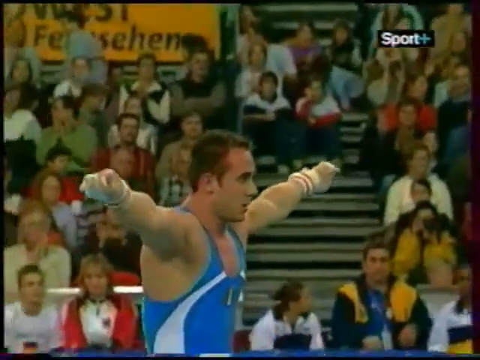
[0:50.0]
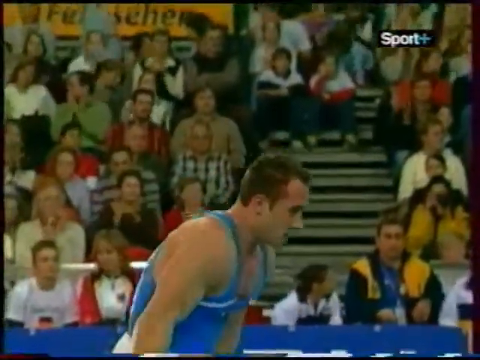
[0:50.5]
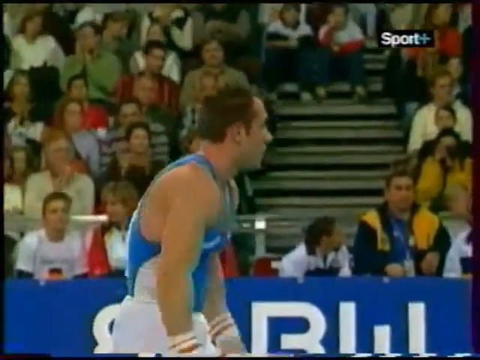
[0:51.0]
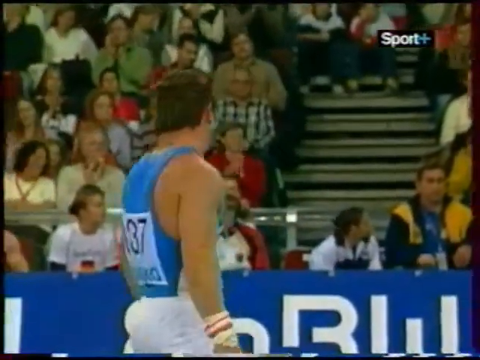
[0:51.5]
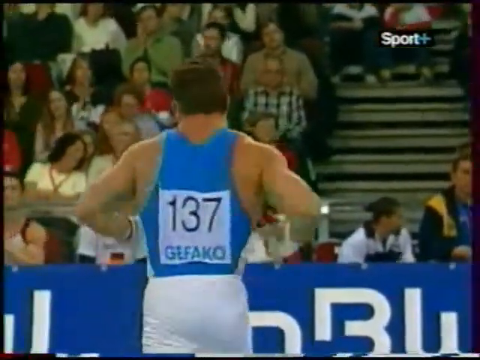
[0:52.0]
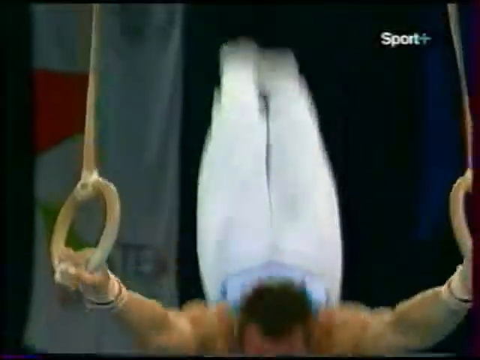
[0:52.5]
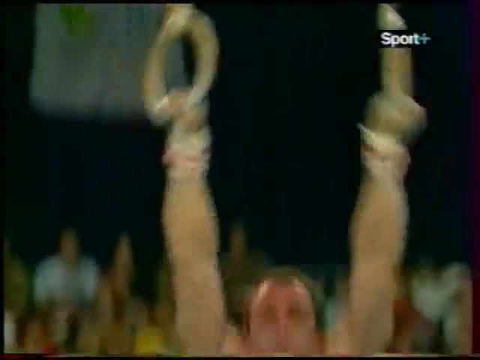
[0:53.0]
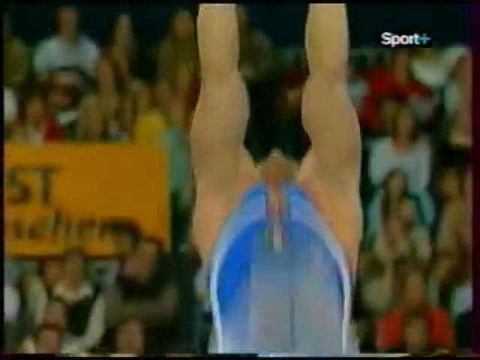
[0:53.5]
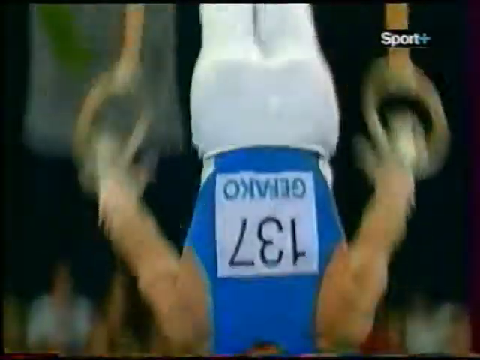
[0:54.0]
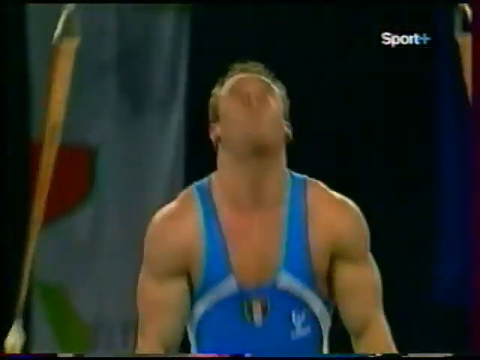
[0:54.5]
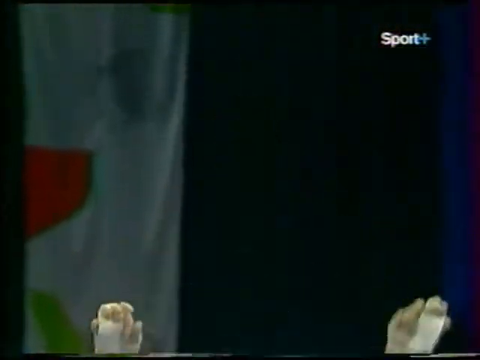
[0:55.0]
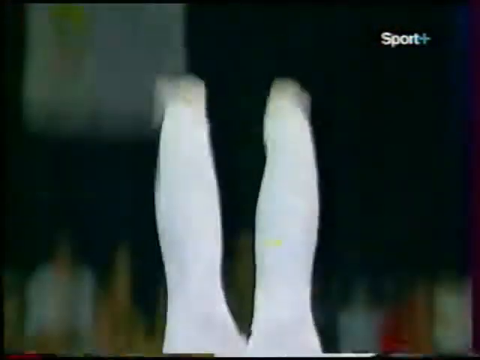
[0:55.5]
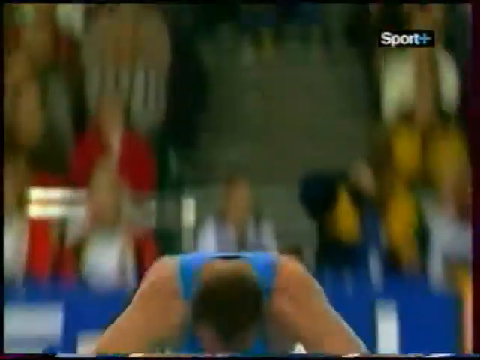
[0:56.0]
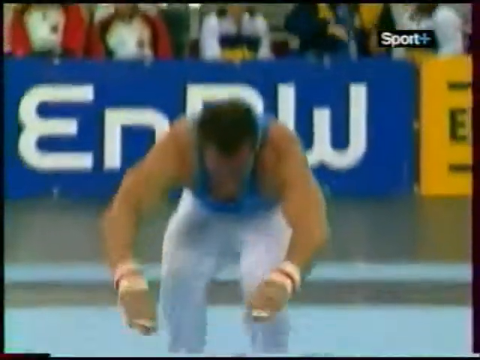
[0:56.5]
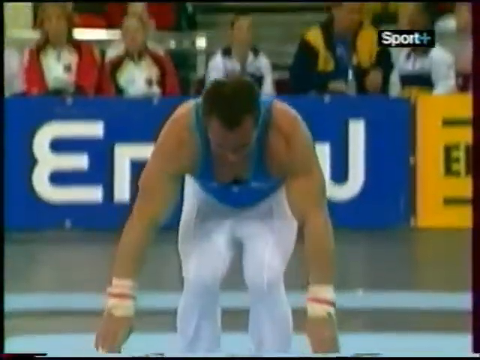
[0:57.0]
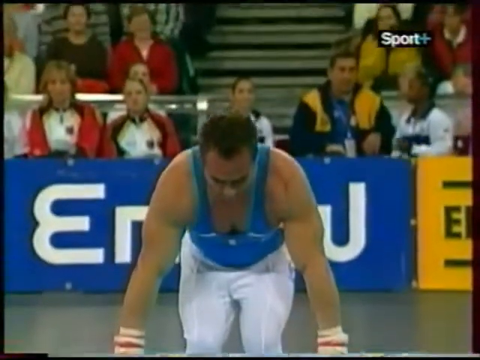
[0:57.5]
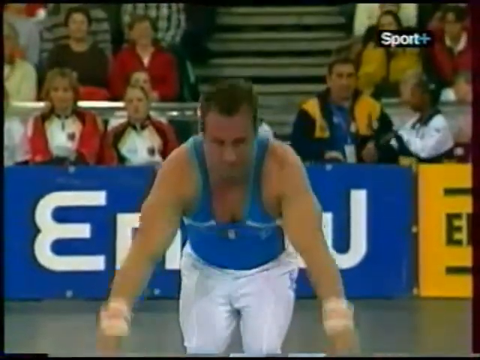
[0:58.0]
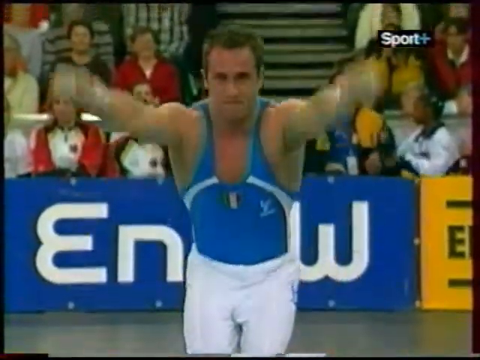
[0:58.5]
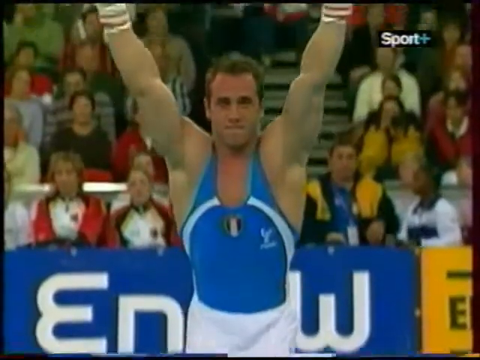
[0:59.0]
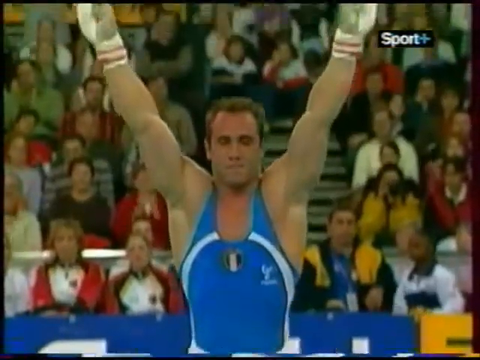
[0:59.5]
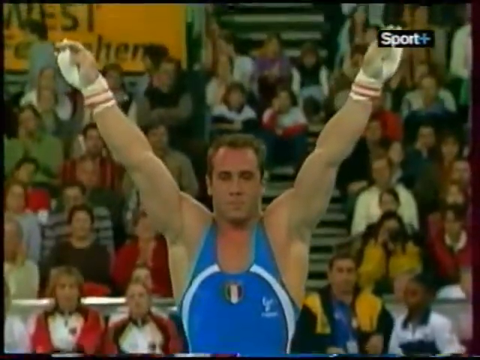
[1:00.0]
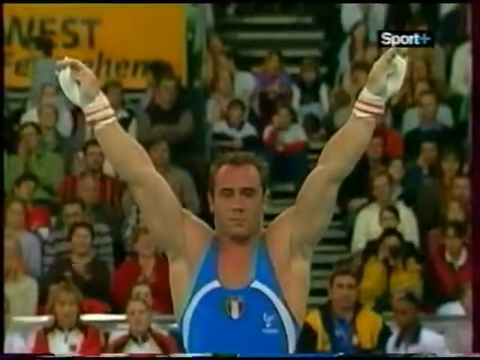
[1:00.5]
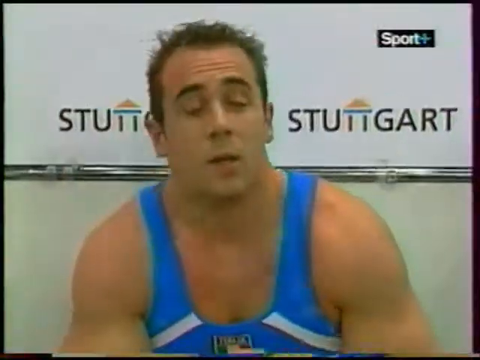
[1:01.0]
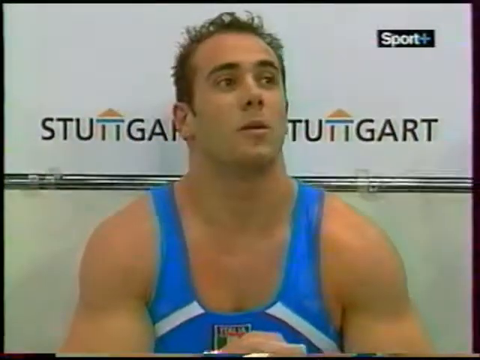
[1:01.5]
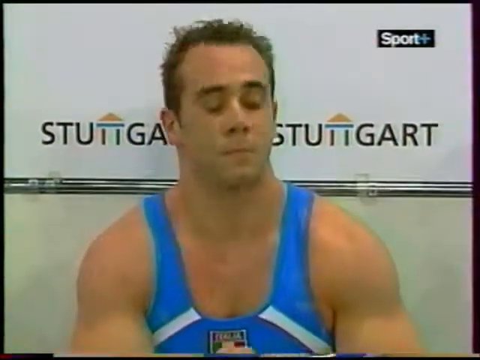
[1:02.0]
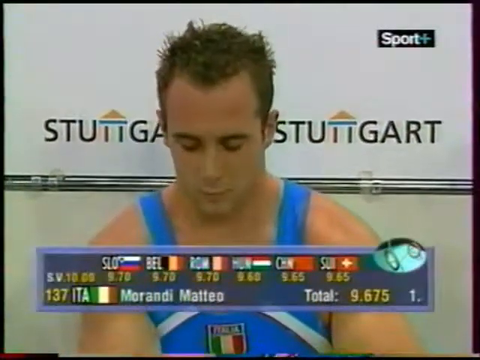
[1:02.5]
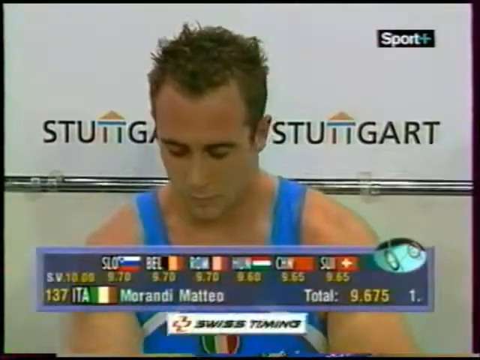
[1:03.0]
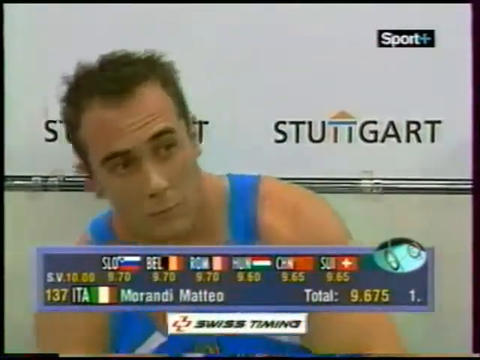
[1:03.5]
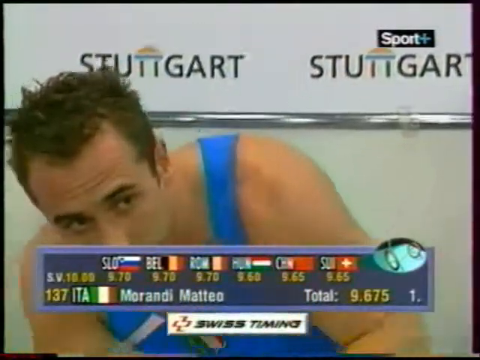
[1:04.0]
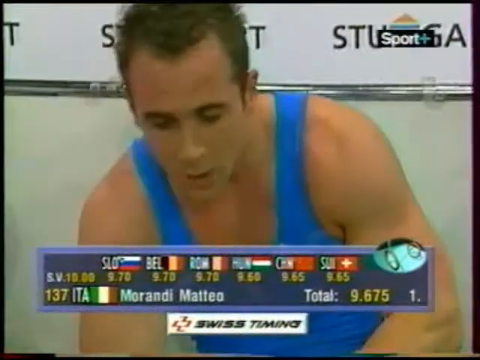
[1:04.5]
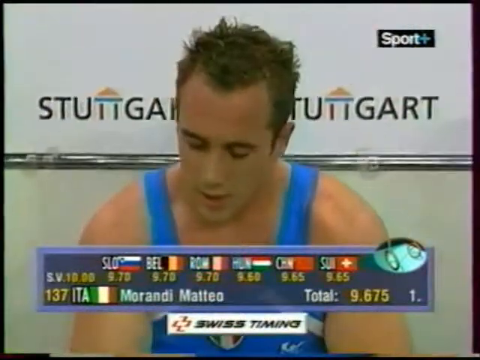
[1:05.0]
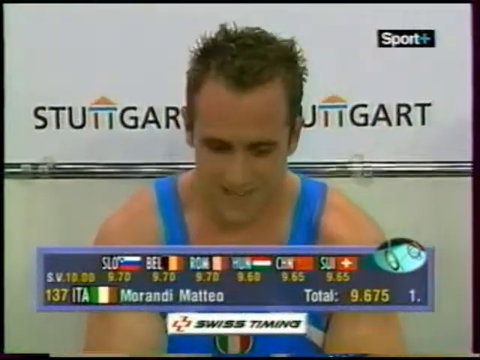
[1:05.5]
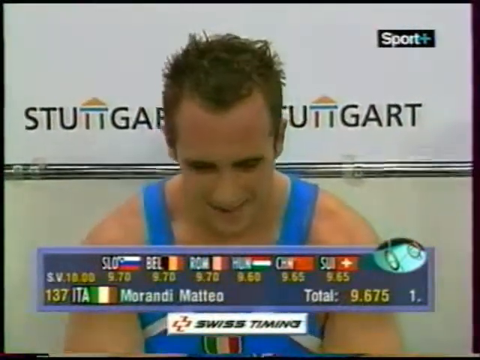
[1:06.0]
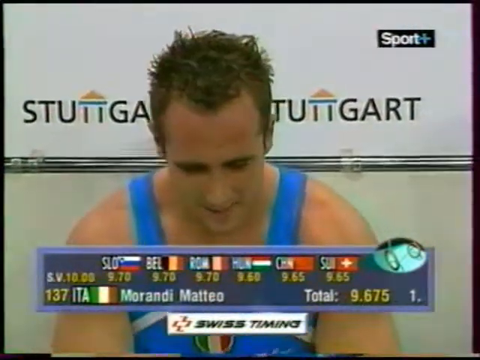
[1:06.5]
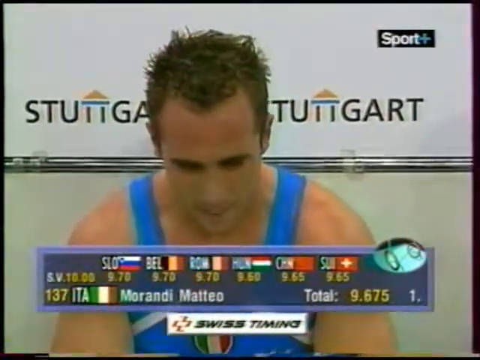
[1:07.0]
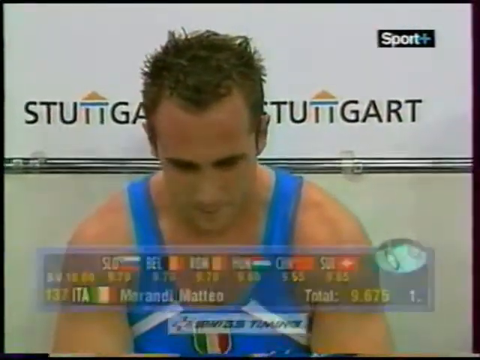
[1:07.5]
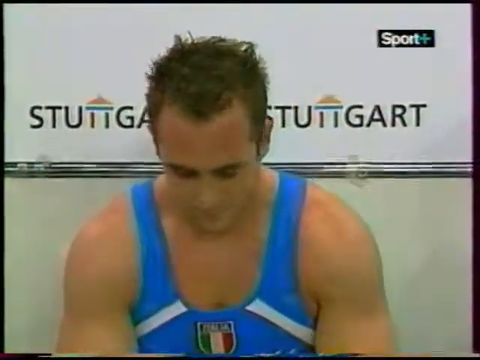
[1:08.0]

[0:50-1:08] Having just performed on the rings and landed, the male gymnast pushes his arms out to the side and then bows to the crowd. As he turns, a number pinned to his back reads "137". He then sits and rests on the side, smiling a little. Scores come up at the bottom in a kind of little chart, with numbers showing how he did in his performance; the man is from Italy, the name reads Morandi Mateo, and his total is 9.675. At the top, flags of some other competitors appear, including a Belgium flag, Romania, Hungary, China, and "SUI", maybe Switzerland. Behind the man's head, "Stuttgart" appears to his left and to his right, with his head blocking the R and T of the first one. "sport plus" appears in the upper right-hand corner.